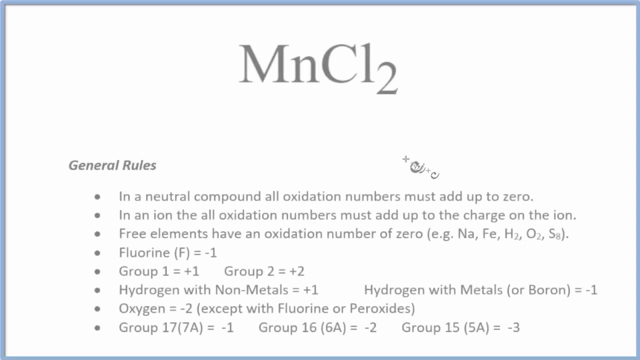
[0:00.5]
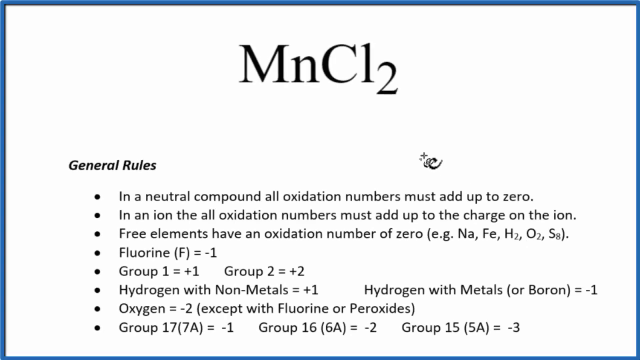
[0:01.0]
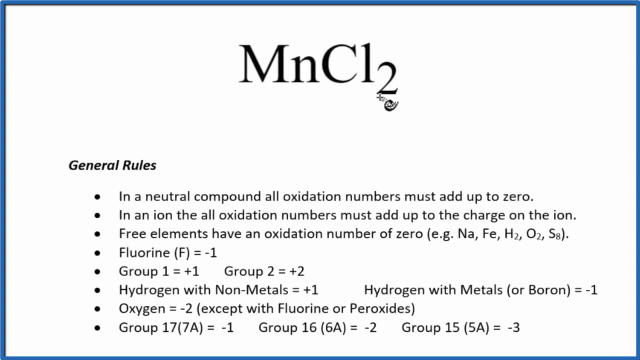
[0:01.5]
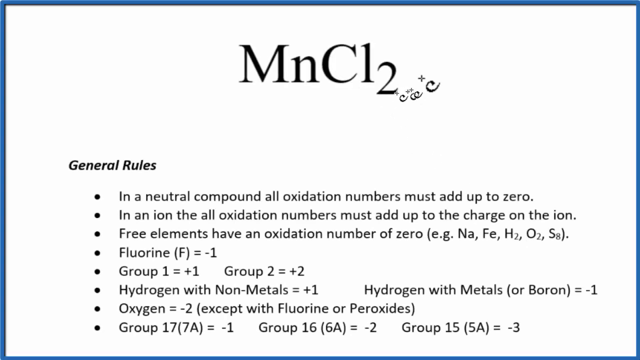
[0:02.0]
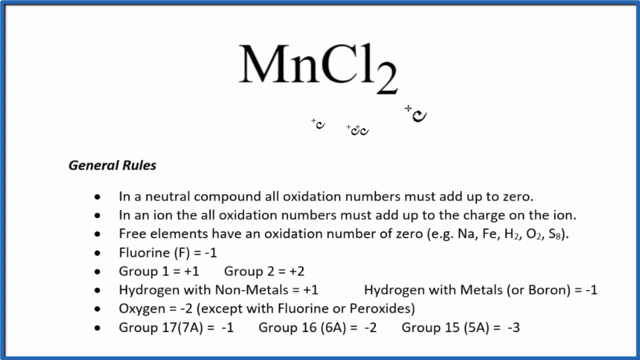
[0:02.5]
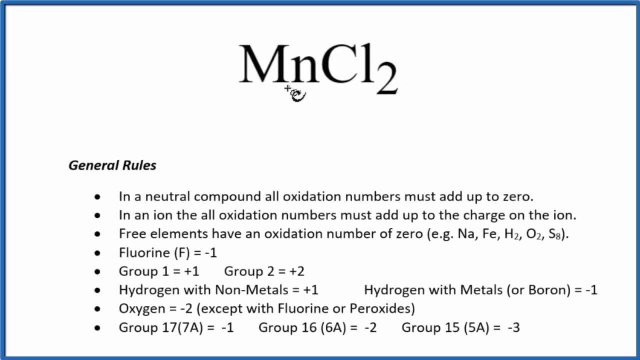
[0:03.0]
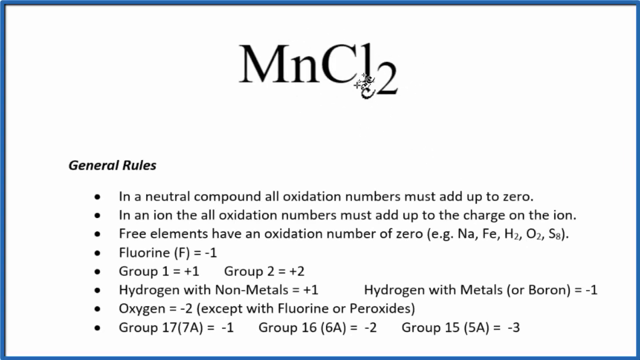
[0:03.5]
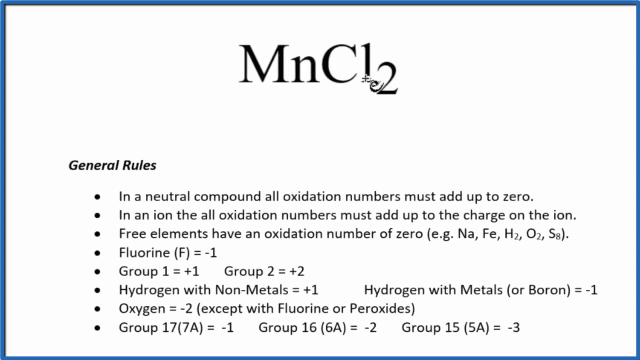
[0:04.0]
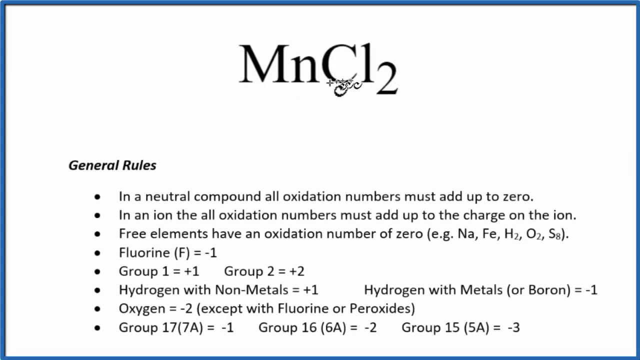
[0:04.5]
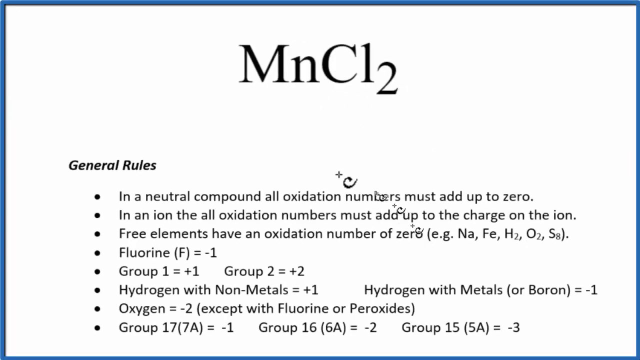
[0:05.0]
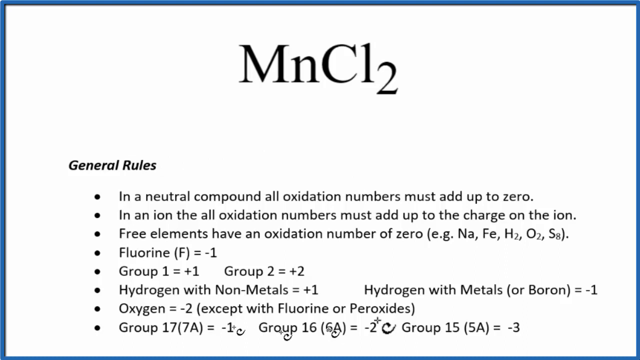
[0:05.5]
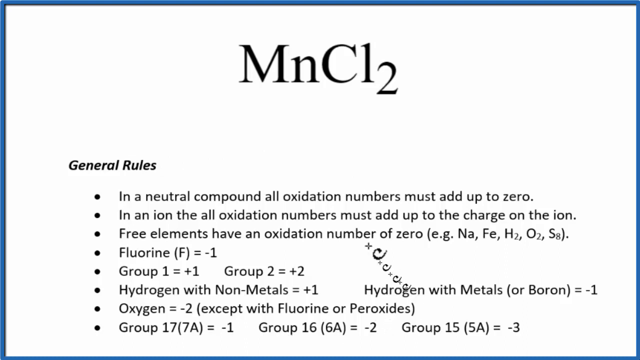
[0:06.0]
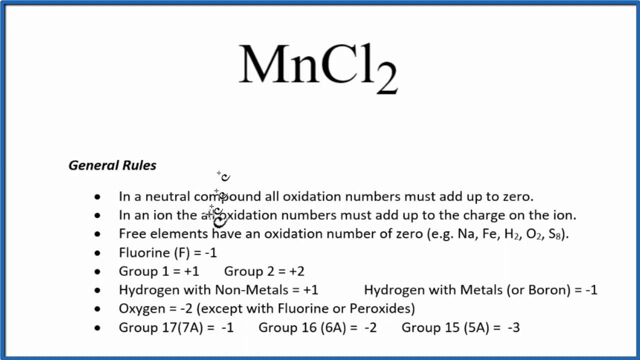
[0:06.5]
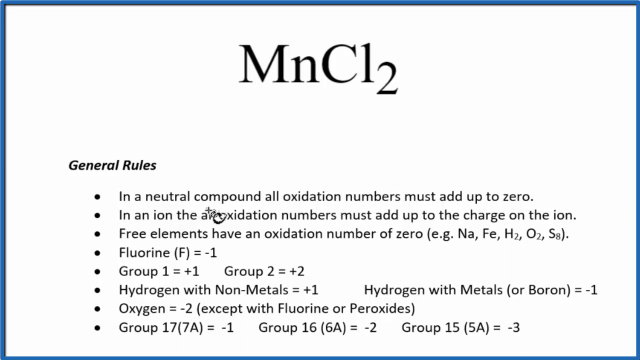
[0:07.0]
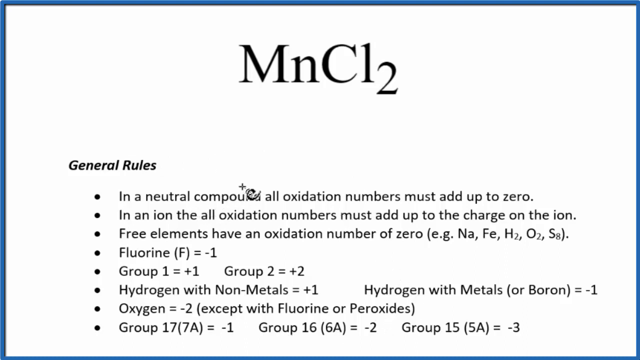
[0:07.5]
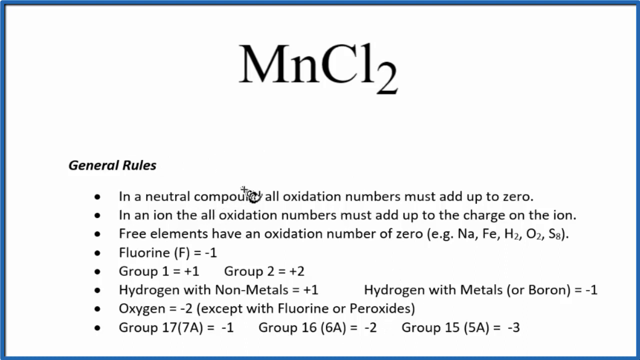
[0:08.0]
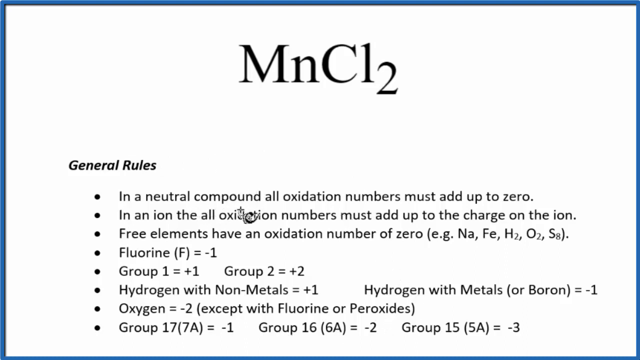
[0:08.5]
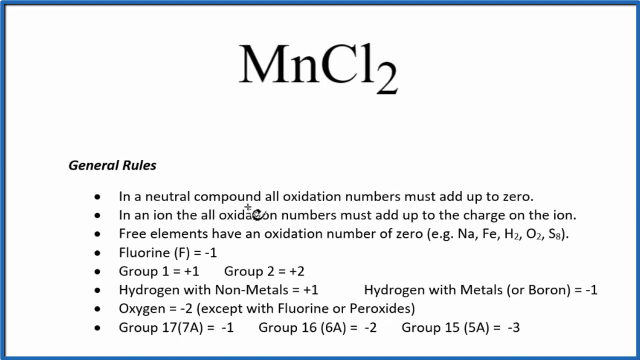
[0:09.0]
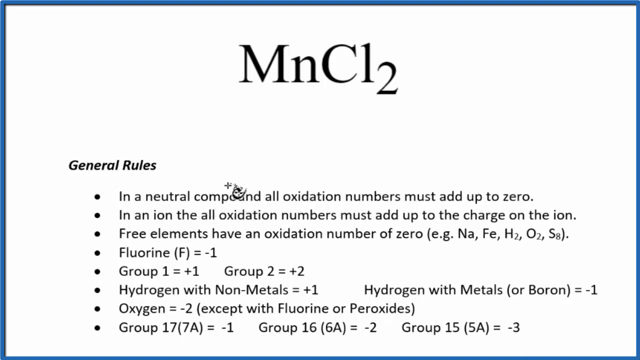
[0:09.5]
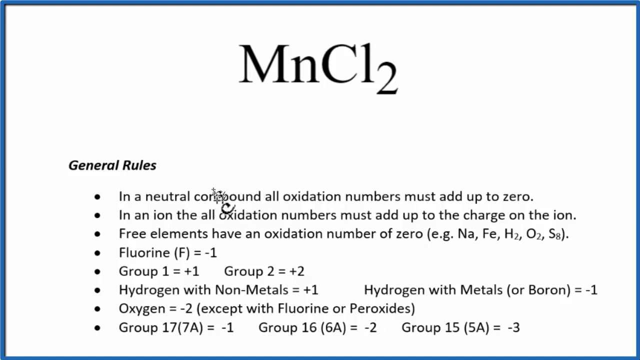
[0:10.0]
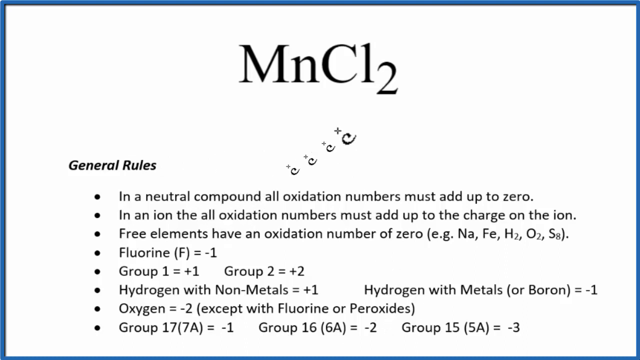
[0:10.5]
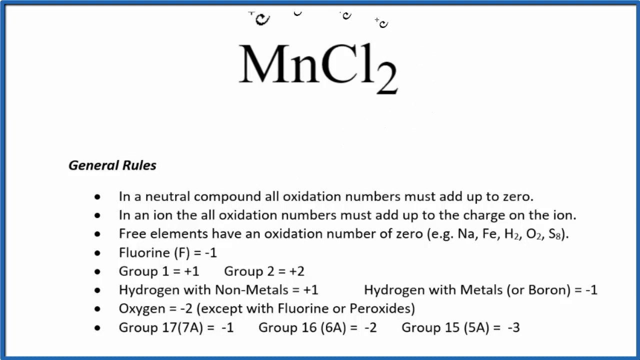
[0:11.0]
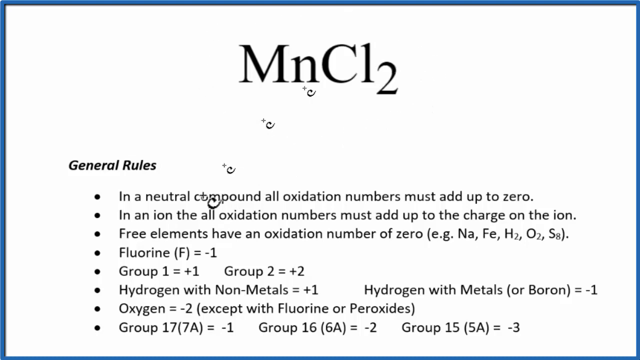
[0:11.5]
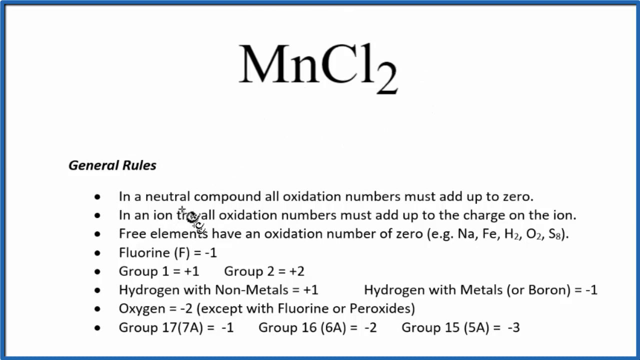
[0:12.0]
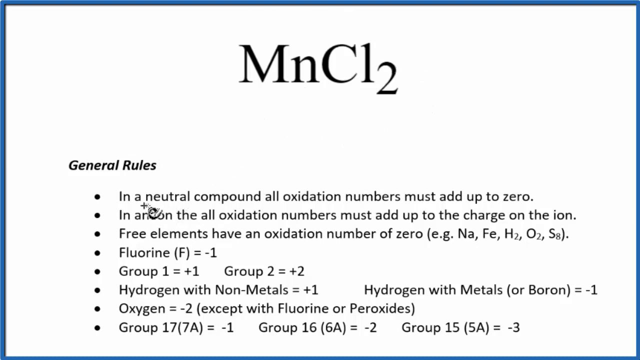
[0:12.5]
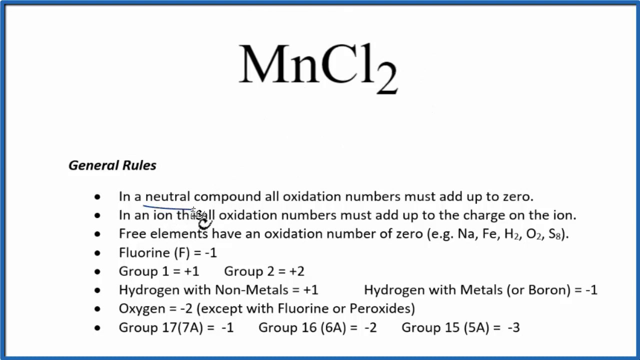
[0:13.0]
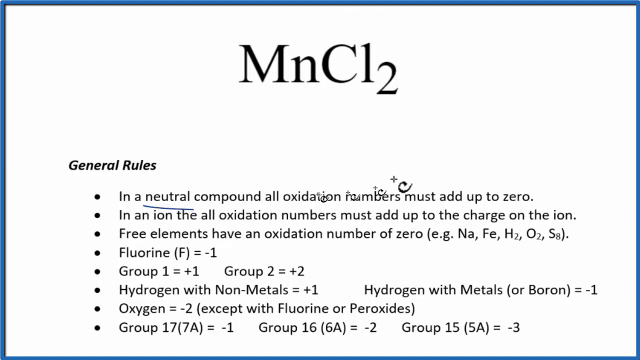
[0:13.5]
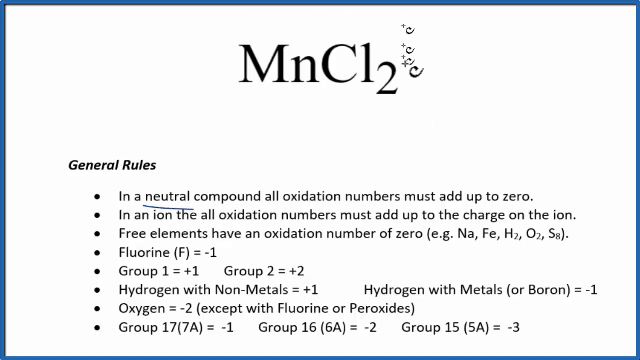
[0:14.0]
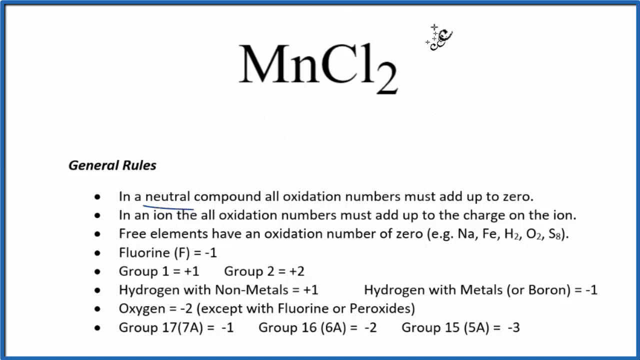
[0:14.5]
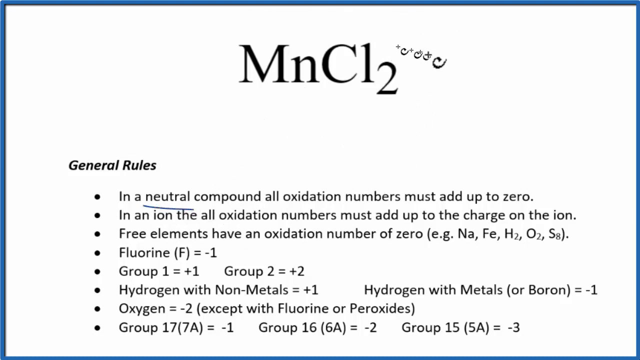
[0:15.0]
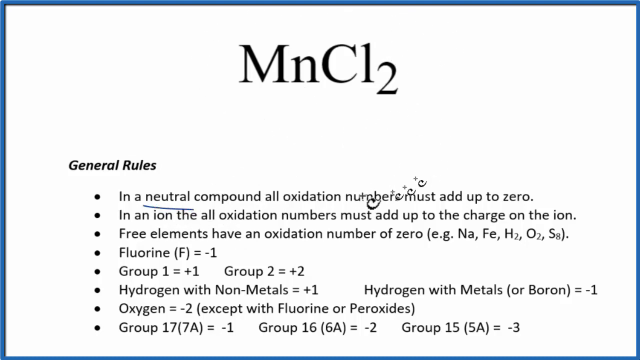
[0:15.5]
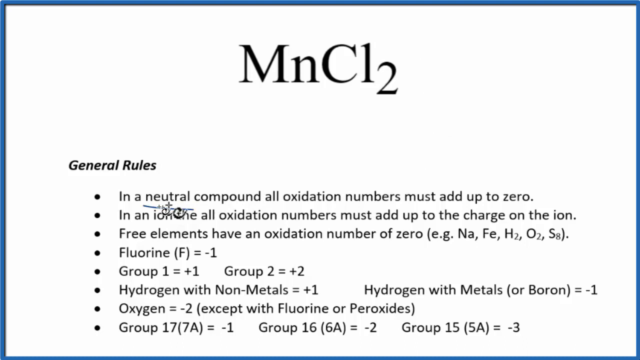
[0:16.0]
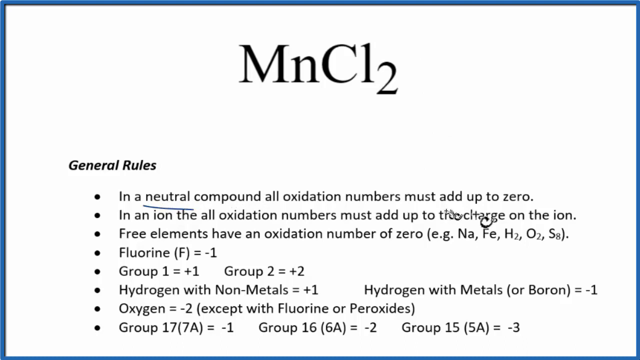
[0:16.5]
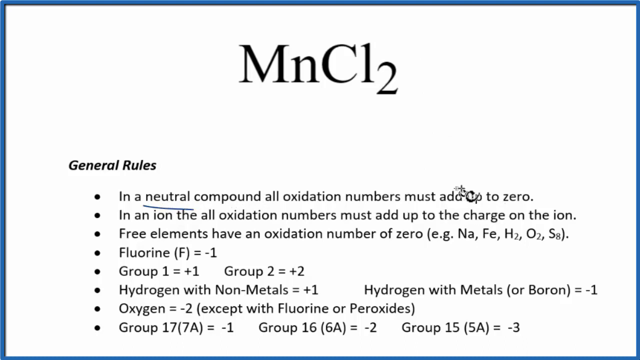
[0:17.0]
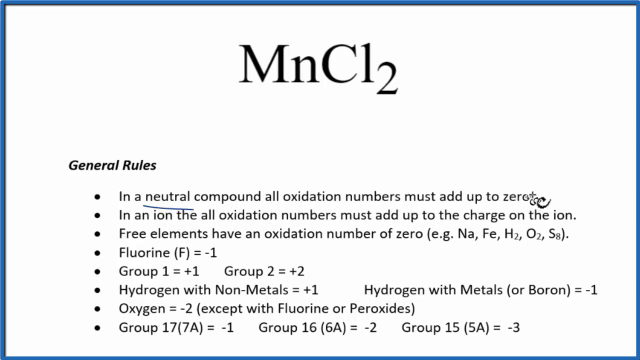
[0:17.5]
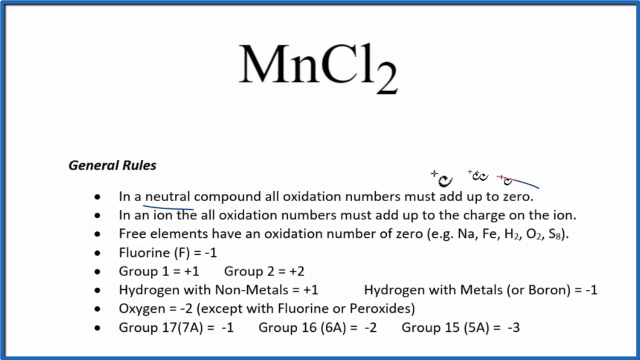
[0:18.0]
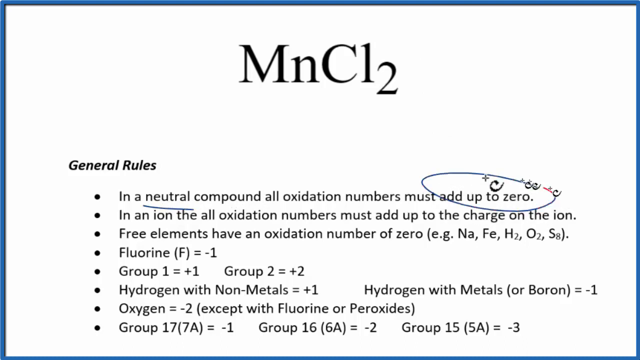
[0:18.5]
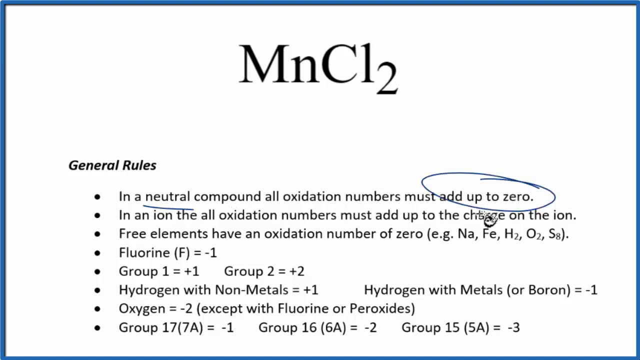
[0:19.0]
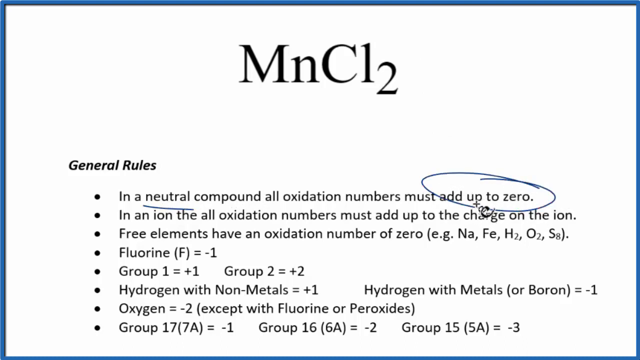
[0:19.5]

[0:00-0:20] The video opens on a blank white screen. Text and a blue outline around the edges of the screen then fade in. At the top center the title reads "MnCl" with a subscript "2" next to the L. Underneath the 2 is a plus sign with several squiggly lines descending diagonally. Beneath the title is a subtitle, "general rules", in black, bold, italicized font, followed by a series of bullet points in a standard sans-serif font. The first bullet point reads "in a neutral compound, all oxidation numbers must add up to zero." The second reads "in an ion, the all-oxidation numbers must add up to the charge on the ion." The third reads "free elements have an oxidation number of zero." The remaining bullet points contain items such as fluorine equals negative one, group one equals plus one, and group two equals plus two. The plus sign with the dangling squiggly lines under the 2 turns out to be a mouse cursor. It circles the title twice, then disappears toward the bottom of the screen and goes off screen. It returns and hovers just above the word "compound" in the first bullet point, dips slightly below the word, hovers above it again, then slides up to circle the title again. Next it circles the word "ion" in the second bullet point and draws a blue line under the word "neutral". It slides back up to draw small circles above and to the right of the "Cl2" in the title, traces an imaginary line over "add up to zero", and then draws a real blue circle around the words "add up to zero".